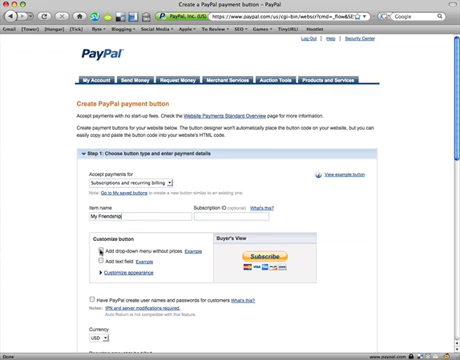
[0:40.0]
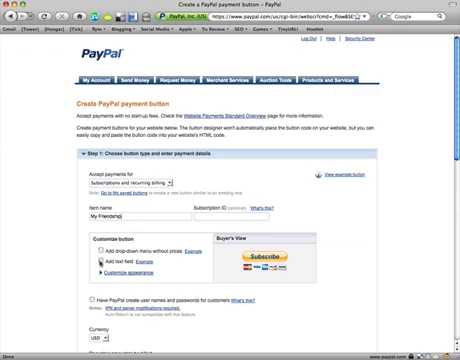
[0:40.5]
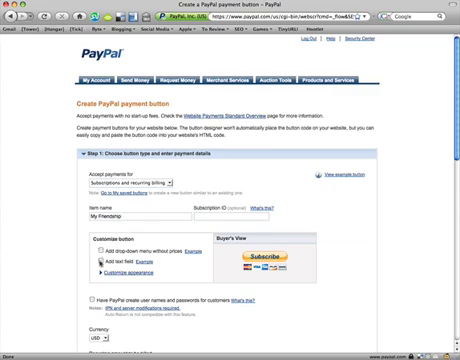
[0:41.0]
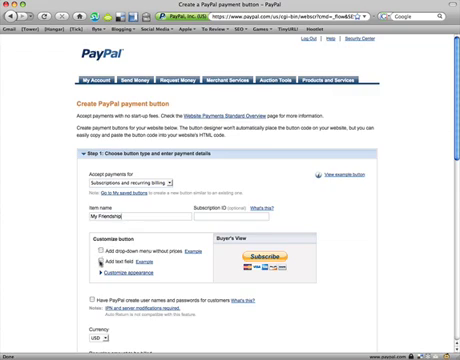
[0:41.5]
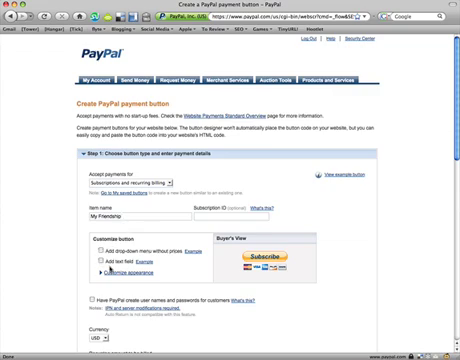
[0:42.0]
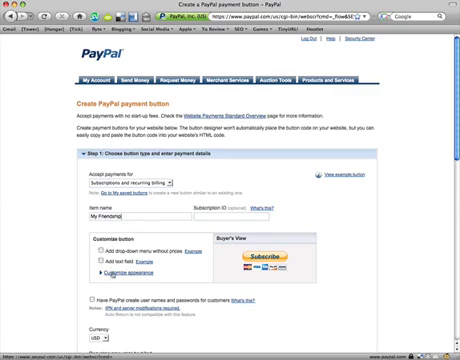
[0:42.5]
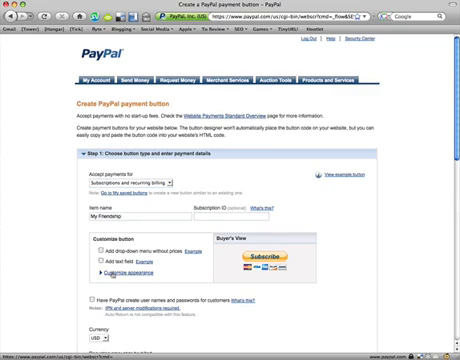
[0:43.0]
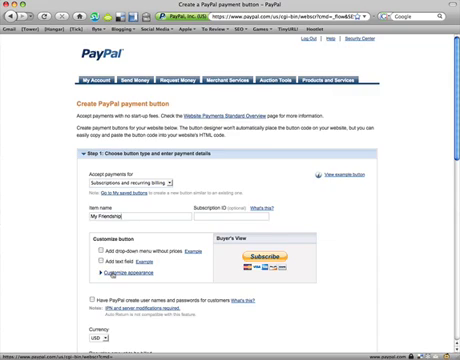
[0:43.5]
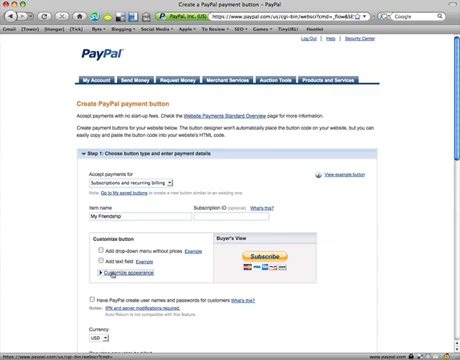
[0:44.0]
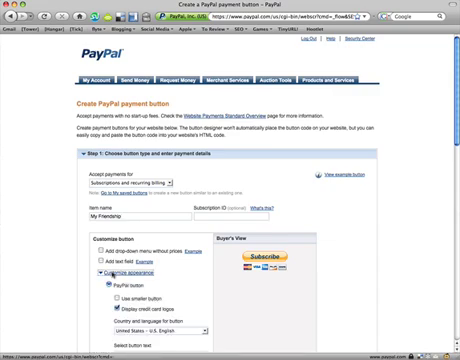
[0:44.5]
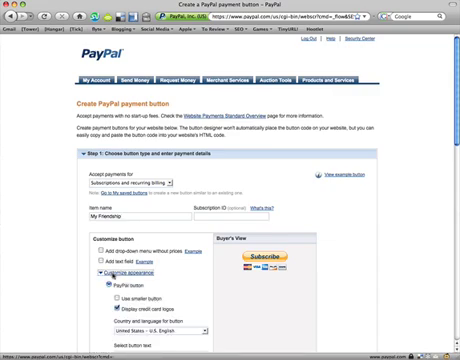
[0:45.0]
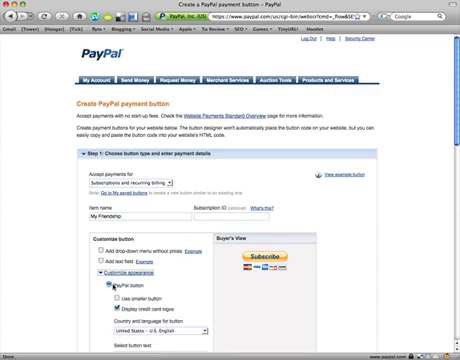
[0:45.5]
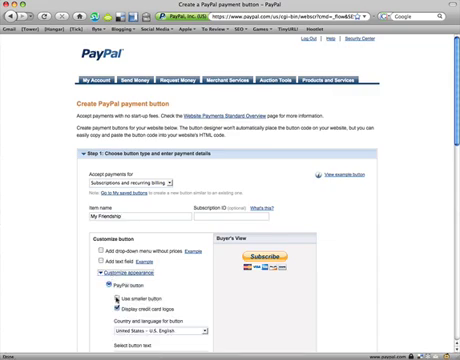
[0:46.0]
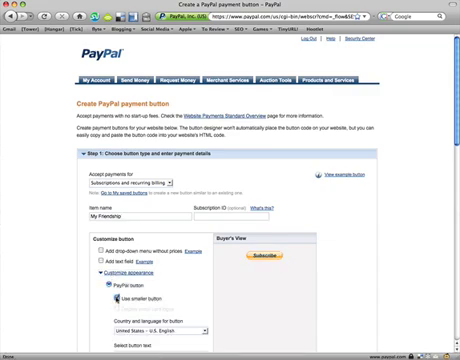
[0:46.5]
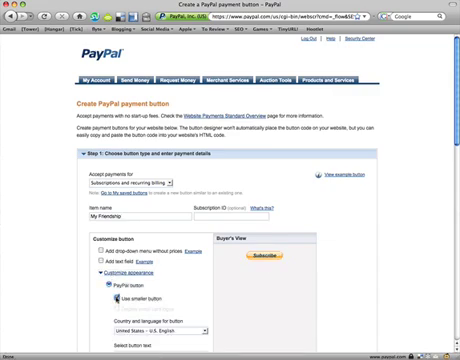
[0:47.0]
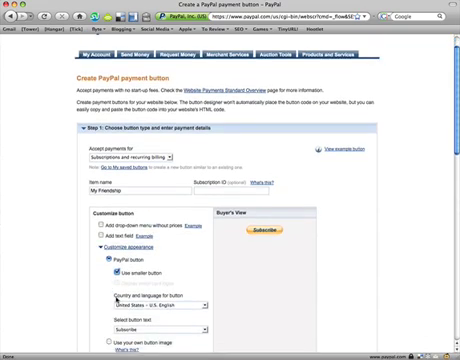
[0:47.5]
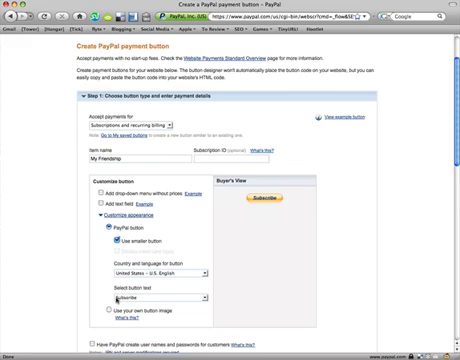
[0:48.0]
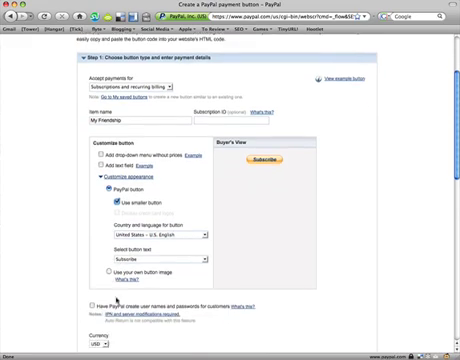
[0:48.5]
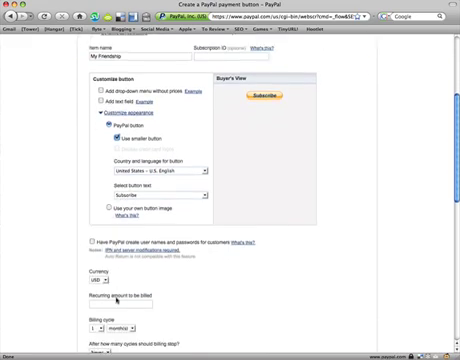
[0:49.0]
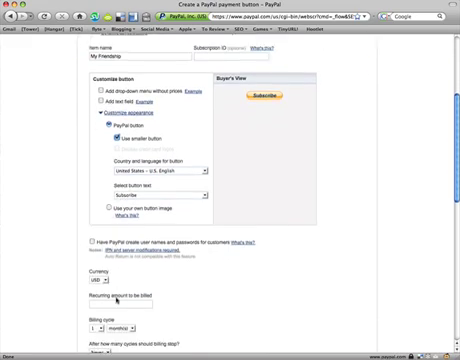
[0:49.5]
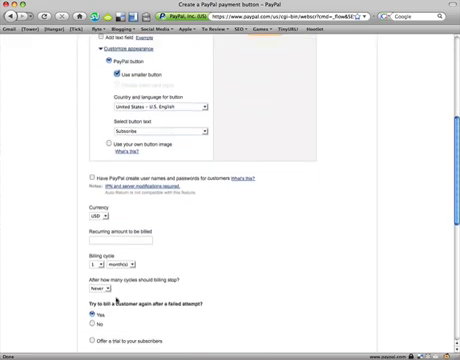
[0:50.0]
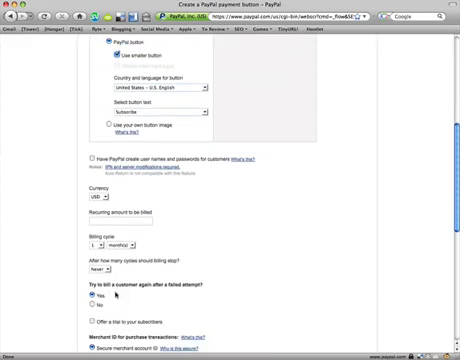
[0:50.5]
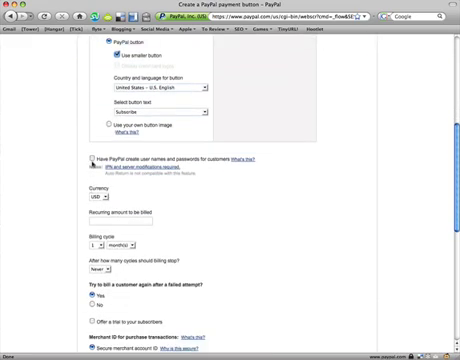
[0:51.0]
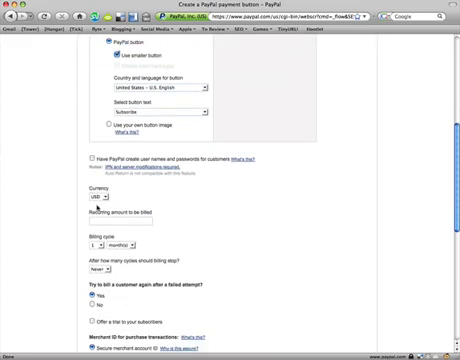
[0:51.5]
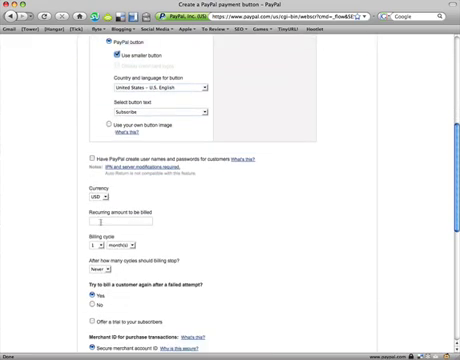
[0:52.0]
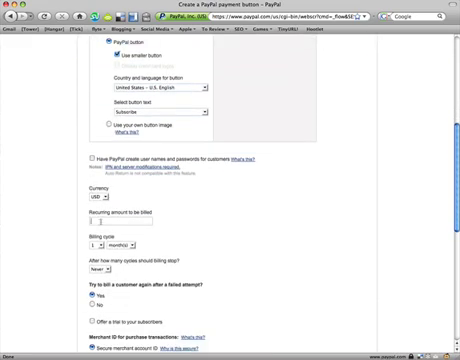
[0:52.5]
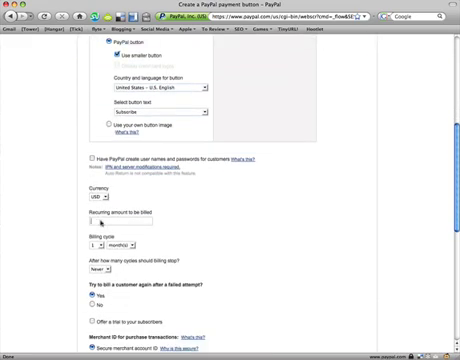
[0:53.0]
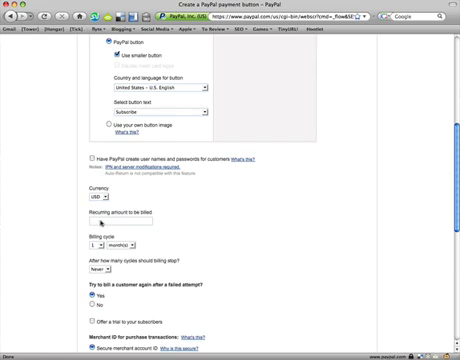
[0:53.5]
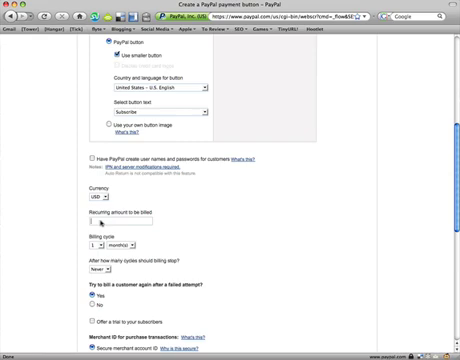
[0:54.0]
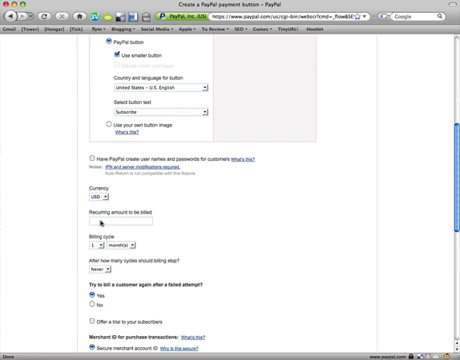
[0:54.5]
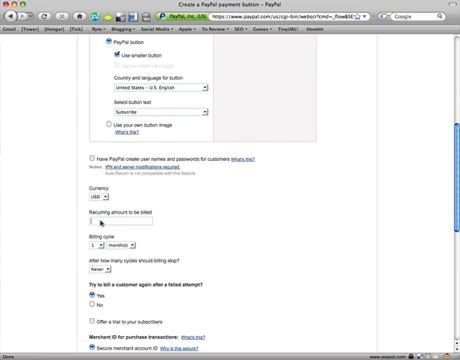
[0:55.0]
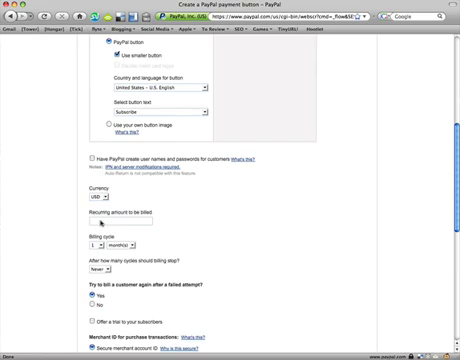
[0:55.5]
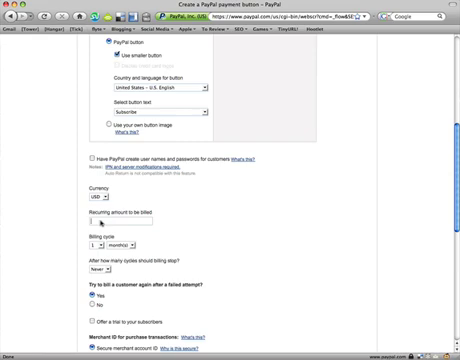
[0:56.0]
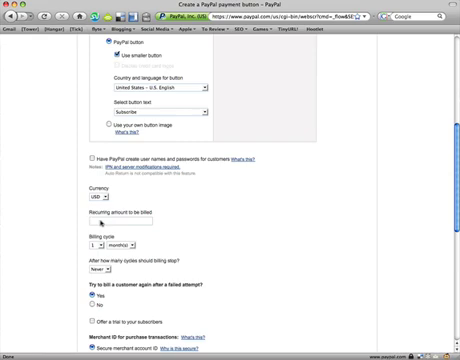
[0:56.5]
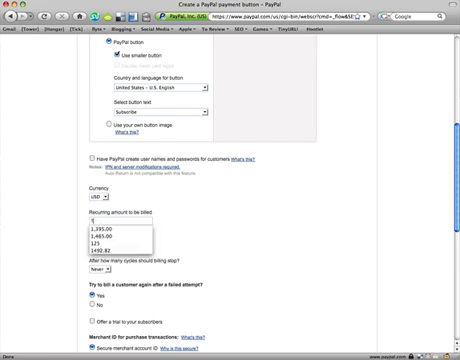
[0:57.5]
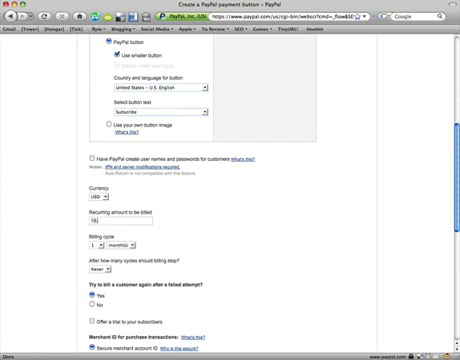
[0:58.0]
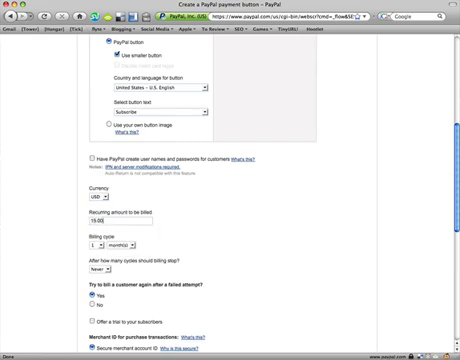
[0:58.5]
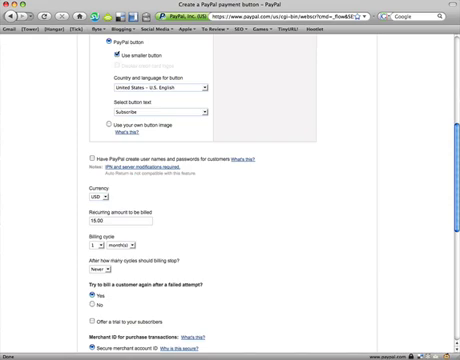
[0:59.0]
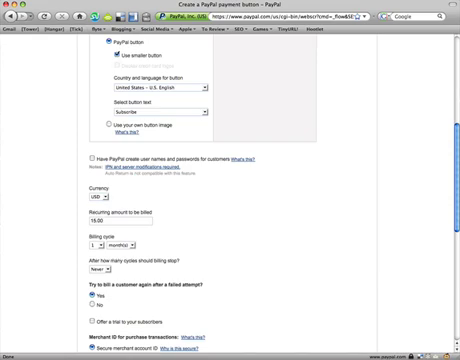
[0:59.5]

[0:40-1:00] The user clicks on the option to customize the appearance of the PayPal button and chooses a smaller checkout button. They then scroll down the page and set a recurring amount to be billed for the subscription service. Many checkboxes, text boxes, and drop-down menus are present for setting up the payment. There are options to change the currency, the type of payment, and the name of the payment, to customize the appearance of the checkout button in the buyer's view, and to change the billing cycle and the recurring amount billed. The cursor is visible as a black arrow as the user navigates the web page and fills in the boxes and information.